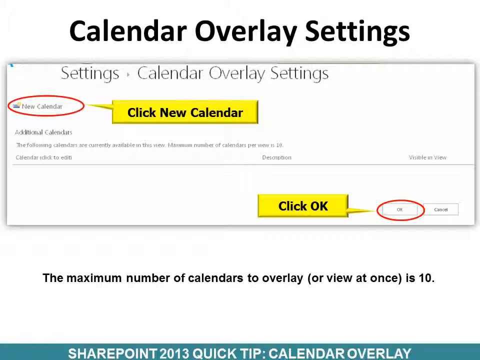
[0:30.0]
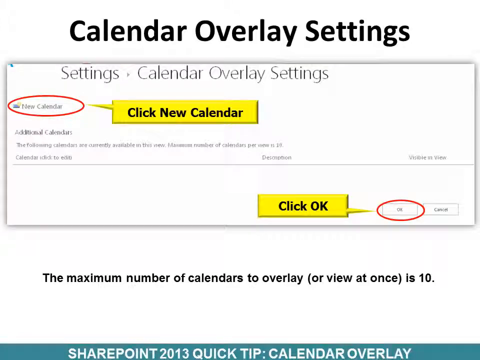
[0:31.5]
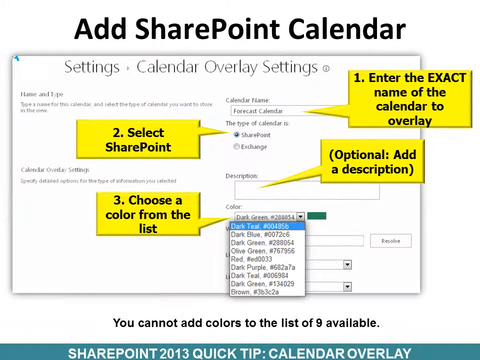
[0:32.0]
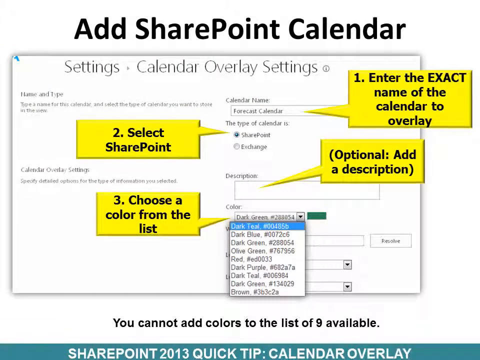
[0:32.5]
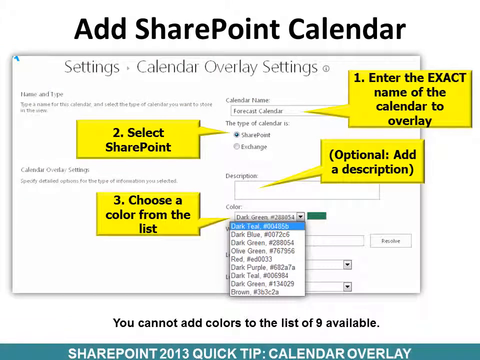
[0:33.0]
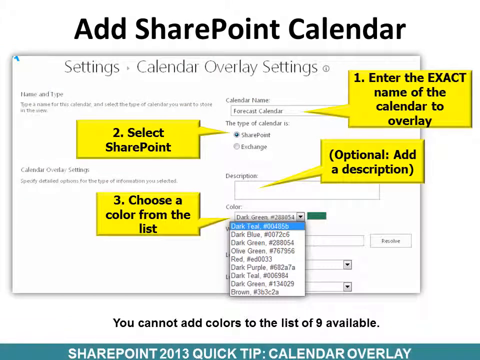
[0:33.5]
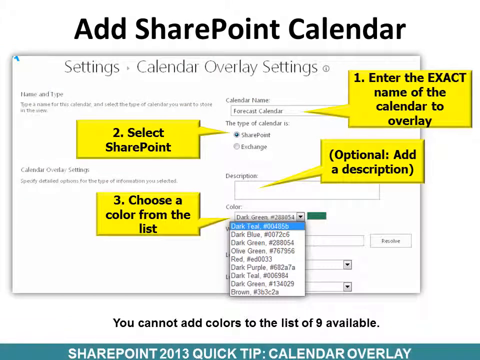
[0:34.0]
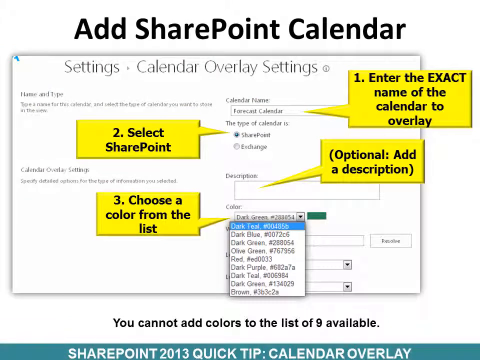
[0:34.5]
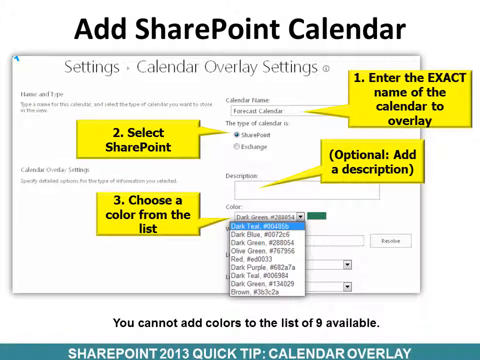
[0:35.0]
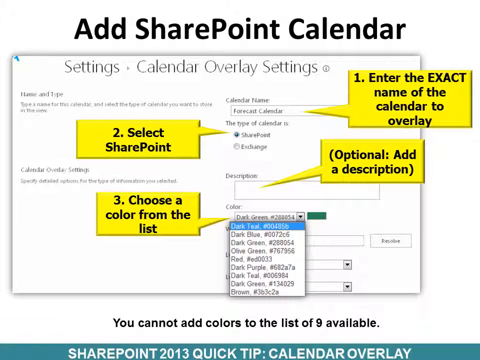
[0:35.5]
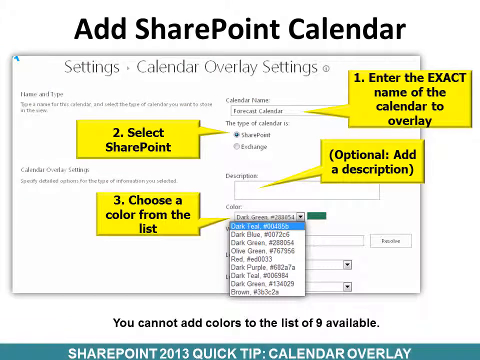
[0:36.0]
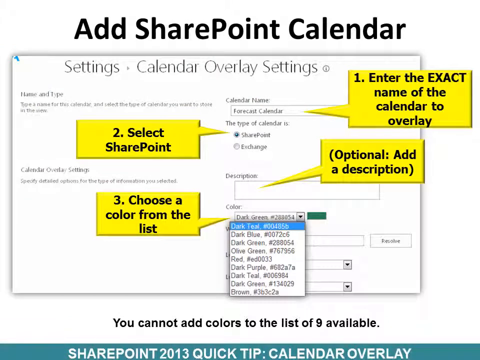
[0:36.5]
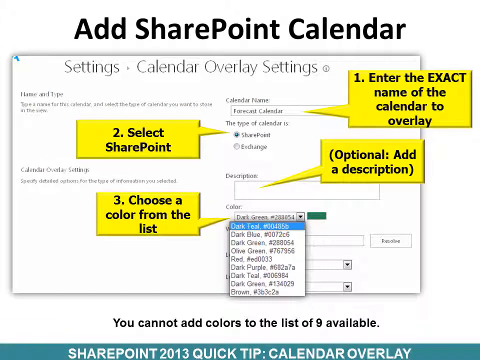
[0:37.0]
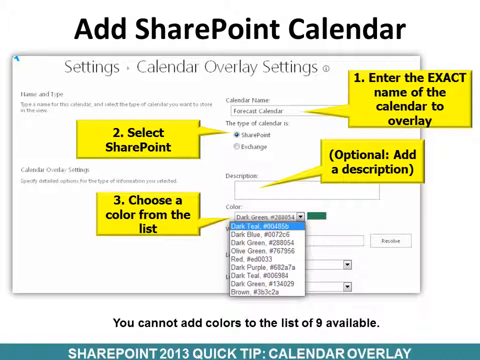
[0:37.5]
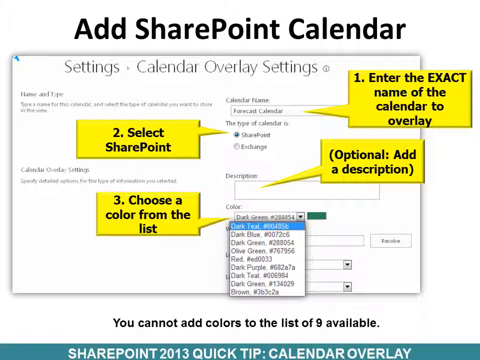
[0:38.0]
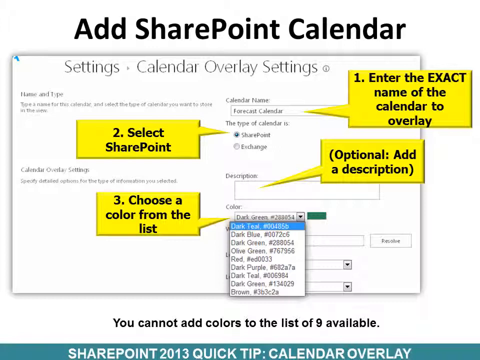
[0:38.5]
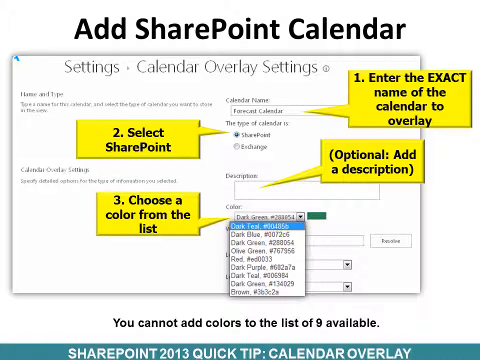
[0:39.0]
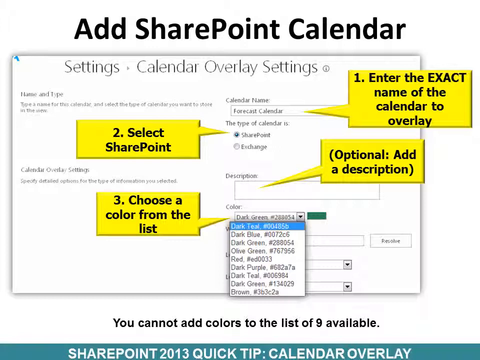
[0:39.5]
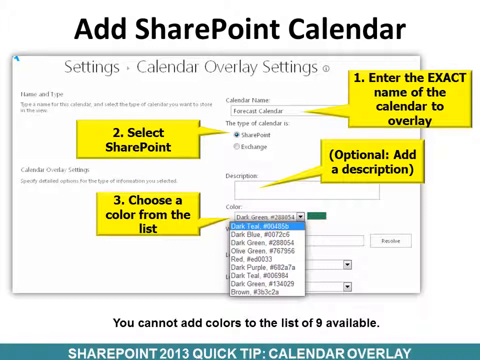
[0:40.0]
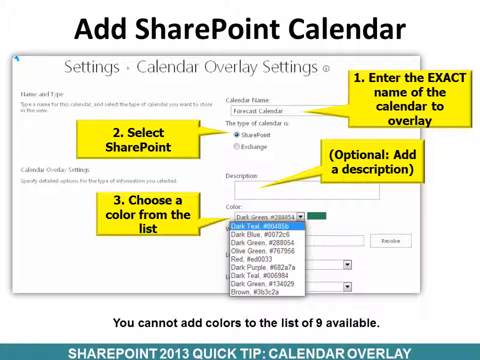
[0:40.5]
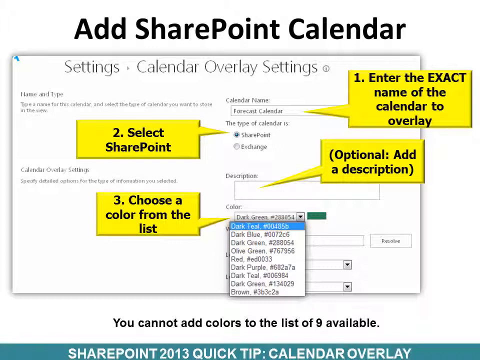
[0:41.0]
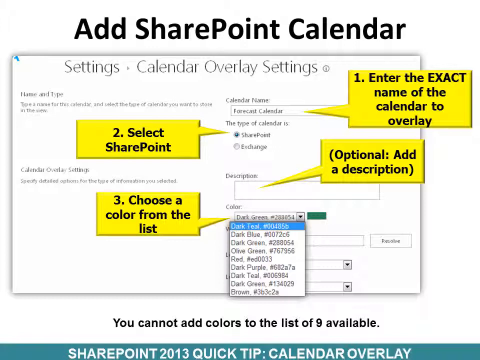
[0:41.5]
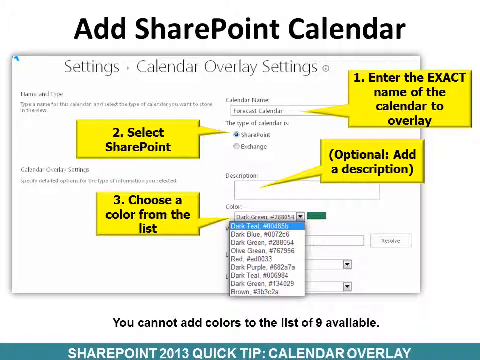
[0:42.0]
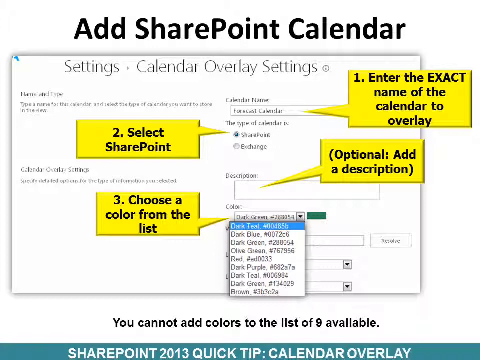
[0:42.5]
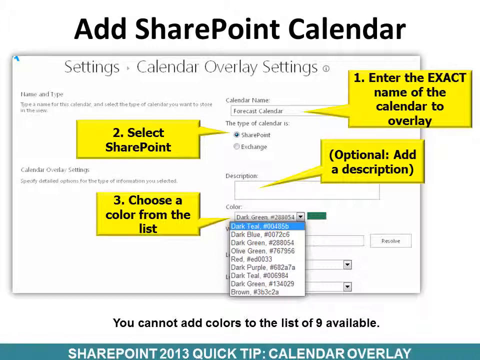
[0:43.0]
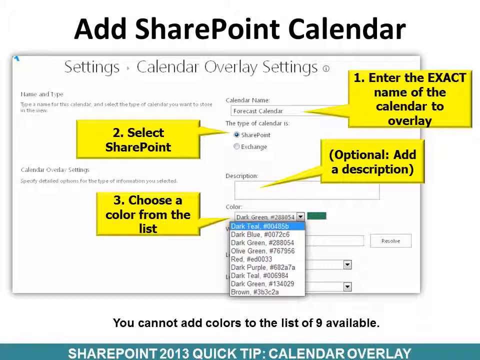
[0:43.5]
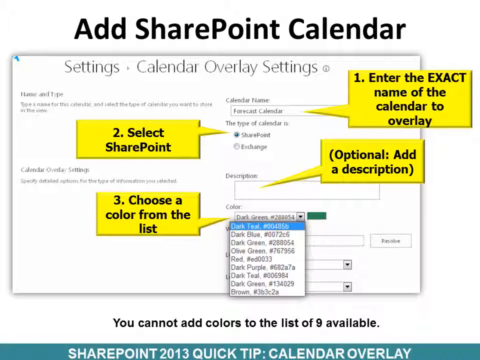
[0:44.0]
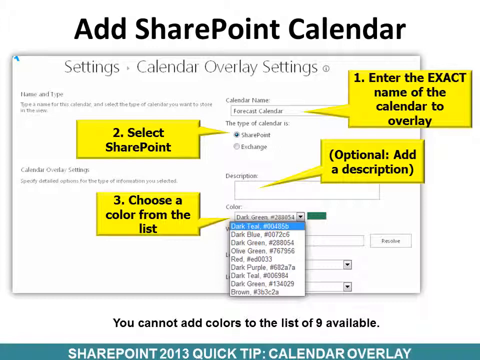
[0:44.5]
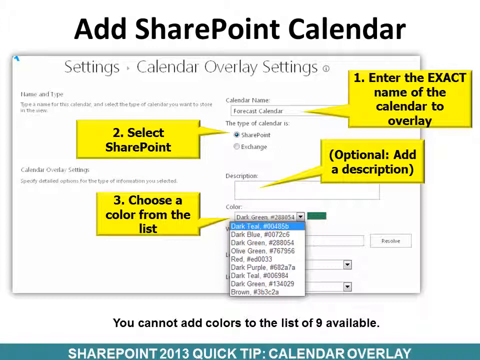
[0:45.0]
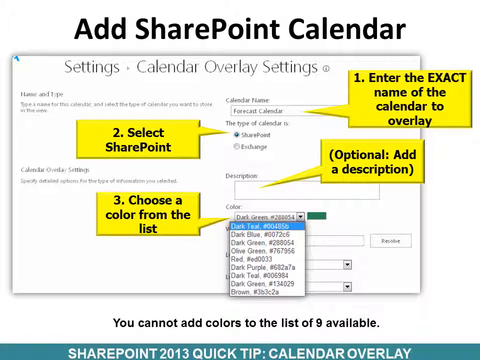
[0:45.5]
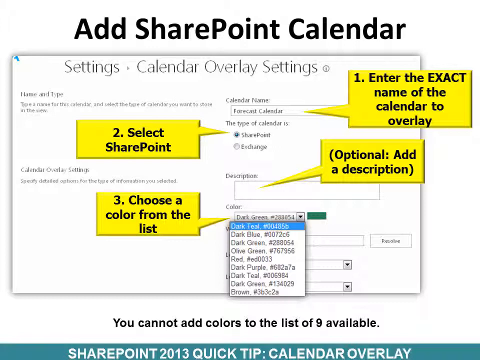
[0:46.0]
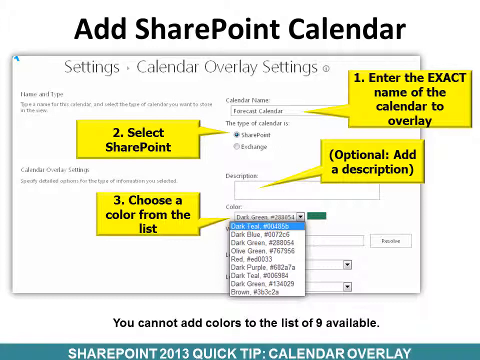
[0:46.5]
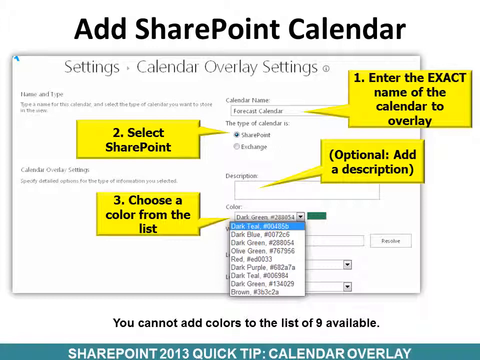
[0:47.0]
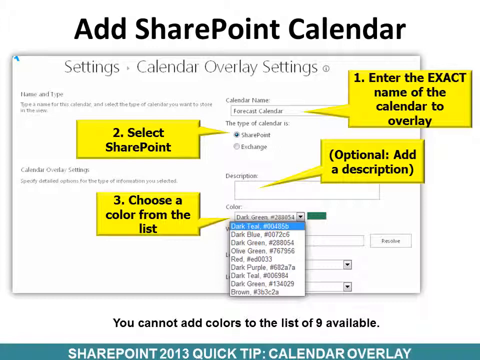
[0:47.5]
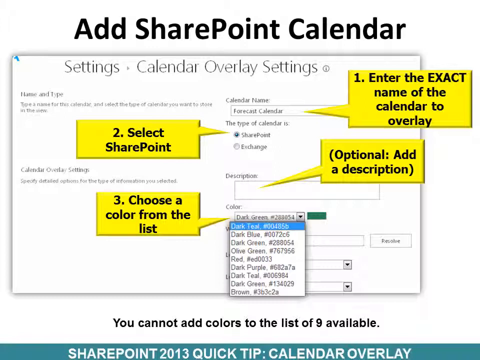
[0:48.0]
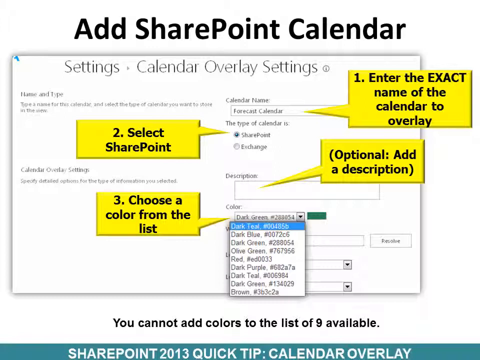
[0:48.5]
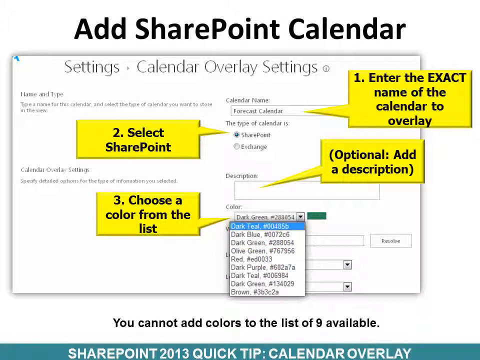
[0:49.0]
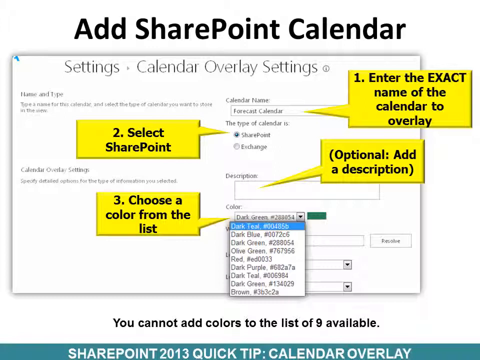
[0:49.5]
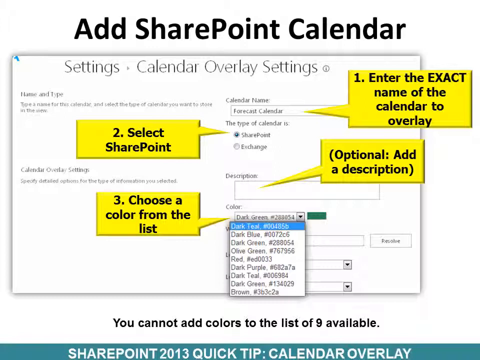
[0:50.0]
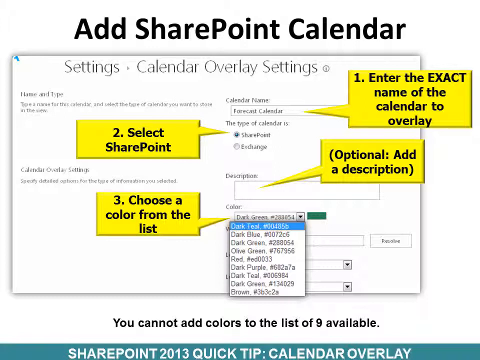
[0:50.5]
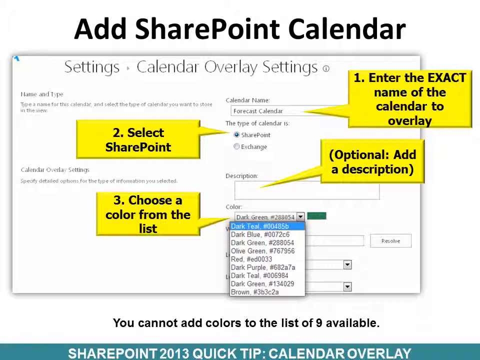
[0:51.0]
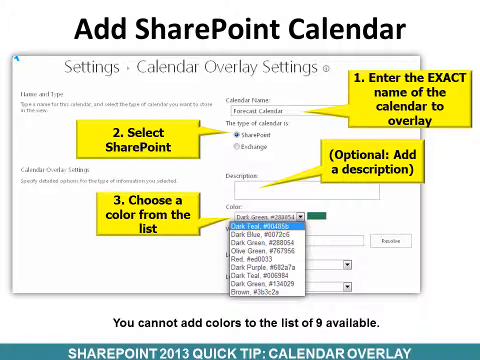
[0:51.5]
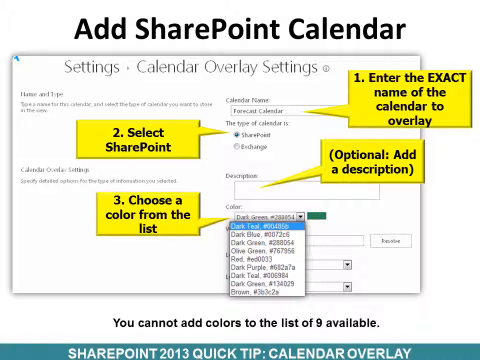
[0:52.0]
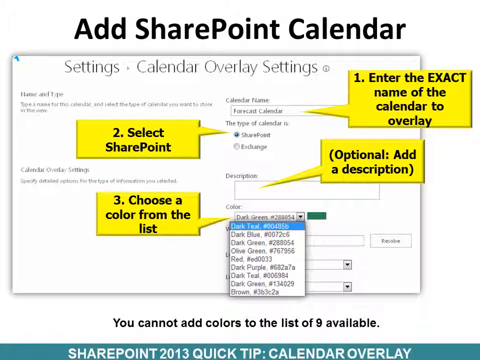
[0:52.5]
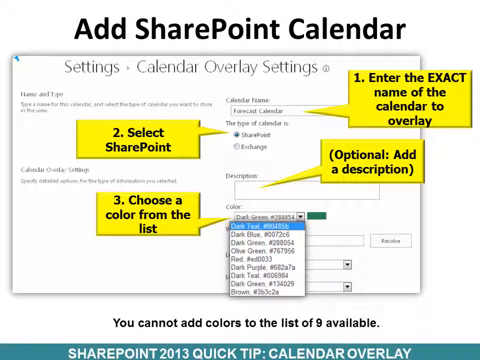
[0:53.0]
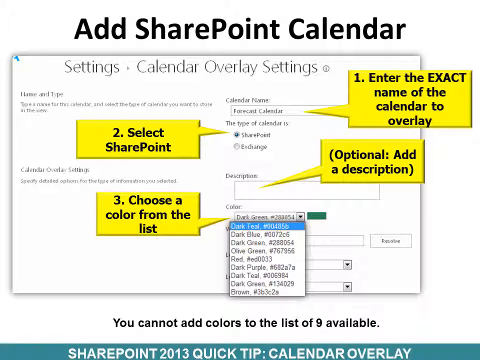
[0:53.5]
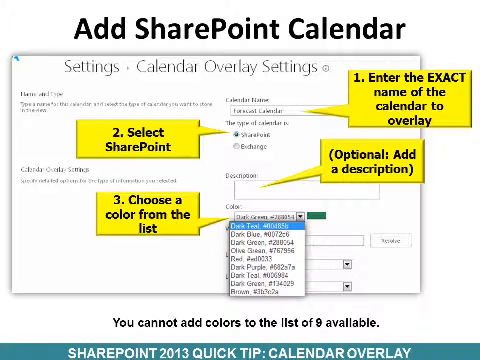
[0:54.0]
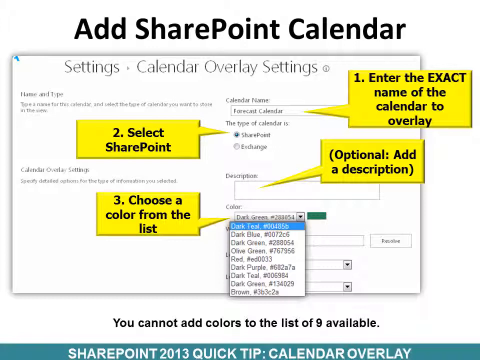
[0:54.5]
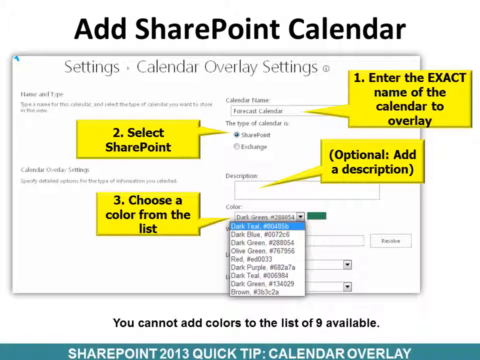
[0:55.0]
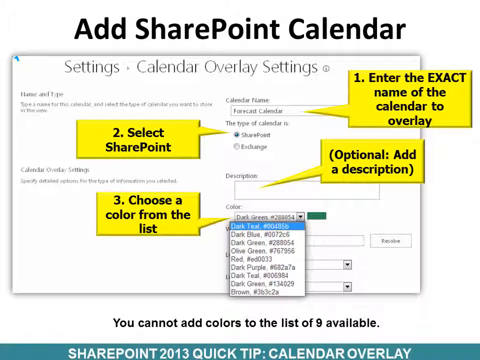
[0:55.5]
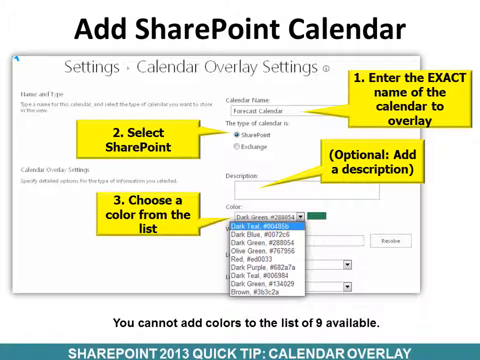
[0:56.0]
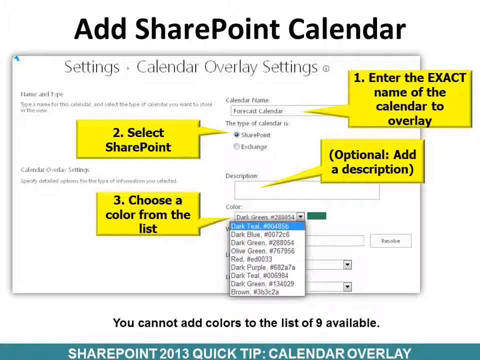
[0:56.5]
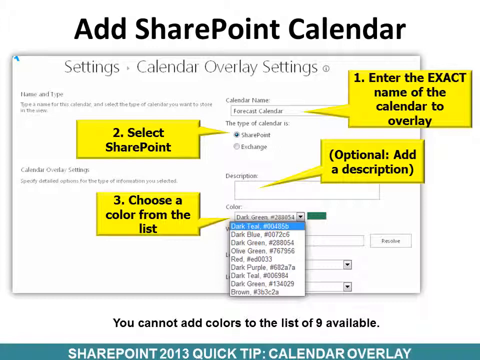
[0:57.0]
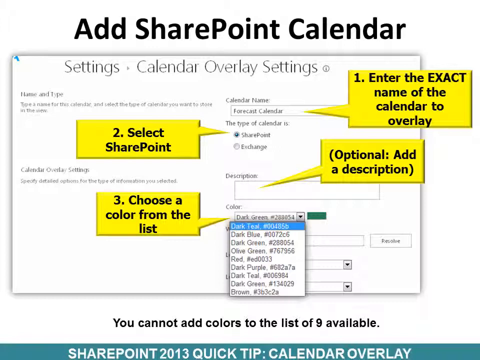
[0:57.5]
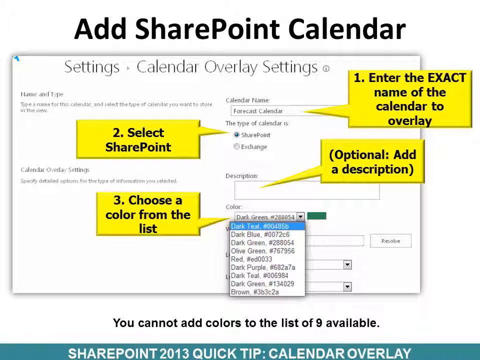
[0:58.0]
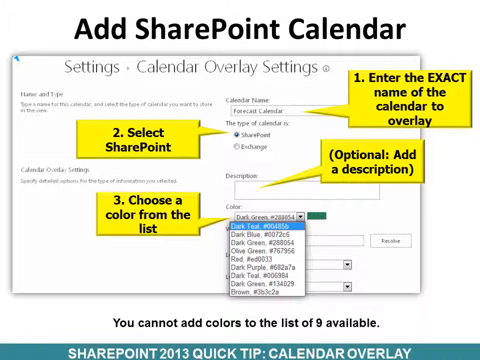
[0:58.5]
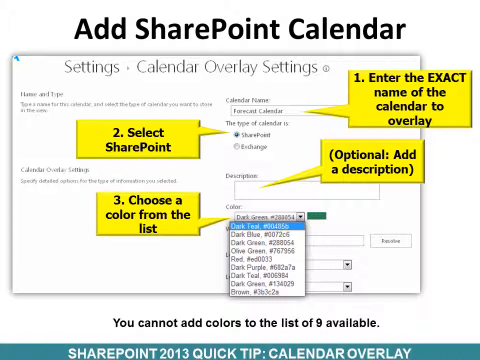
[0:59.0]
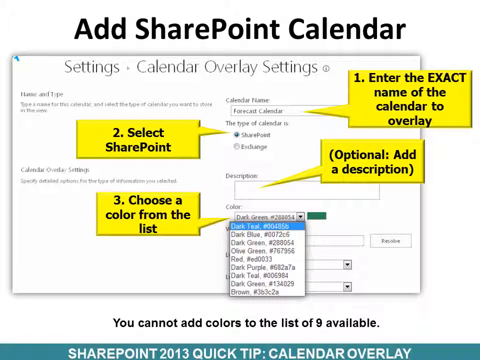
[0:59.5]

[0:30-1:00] The screen shows where to find the settings for calendar overlays. The first instruction, outlined in yellow and black, is to enter the exact name of the calendar overlay. The second instruction, in yellow highlights, is about selecting a SharePoint to share. The third, which is optional, is to add a description of the calendar, and another third point says to choose a color from the list. The on-screen click-and-point instructions continue through setting up the calendar overlay.